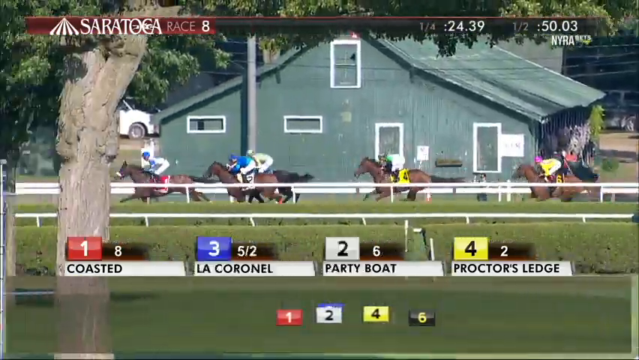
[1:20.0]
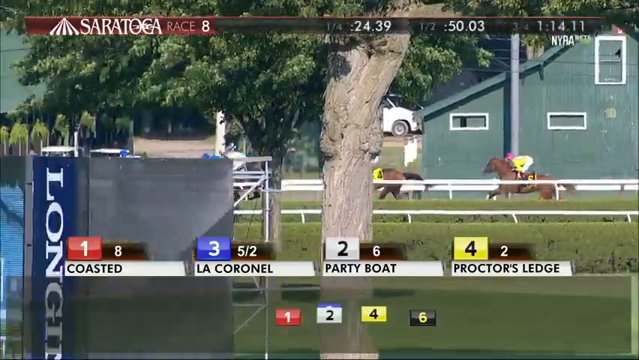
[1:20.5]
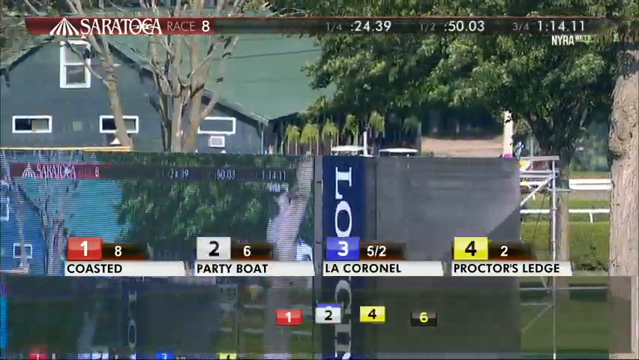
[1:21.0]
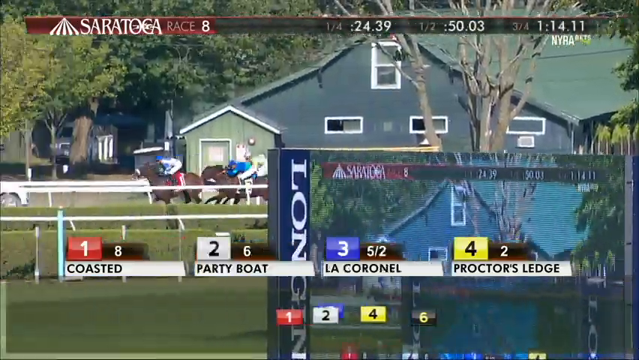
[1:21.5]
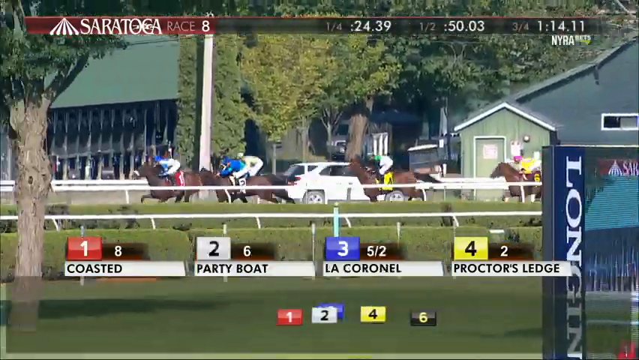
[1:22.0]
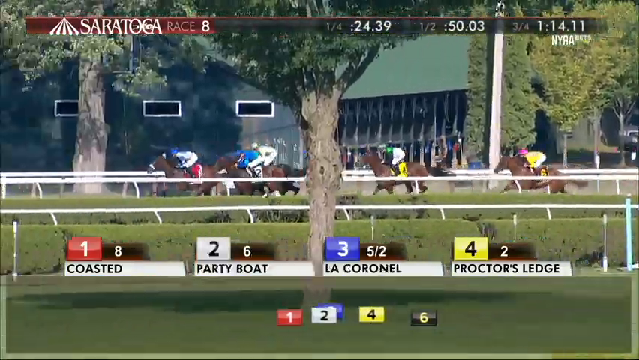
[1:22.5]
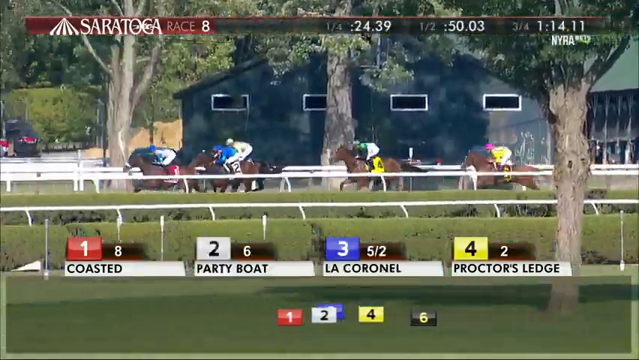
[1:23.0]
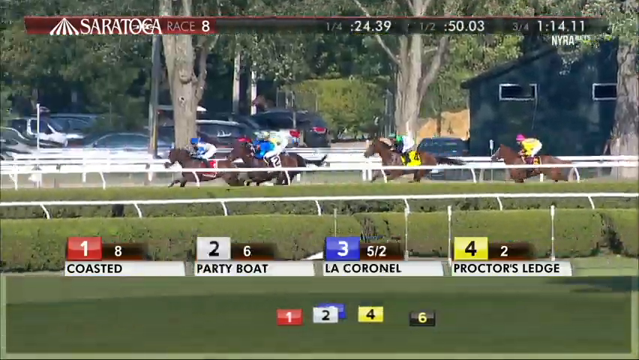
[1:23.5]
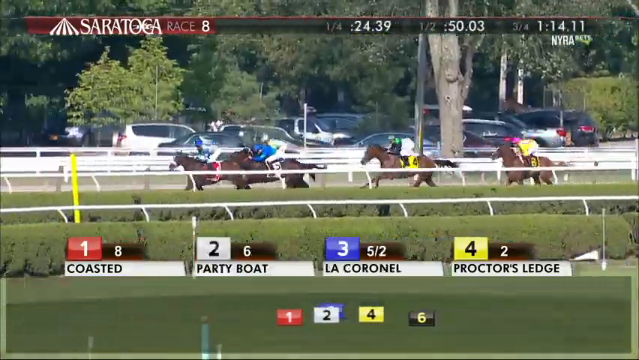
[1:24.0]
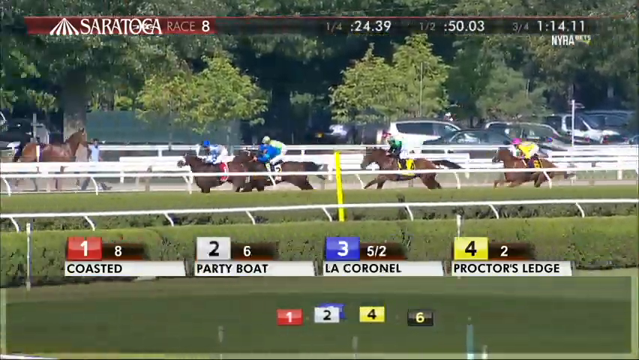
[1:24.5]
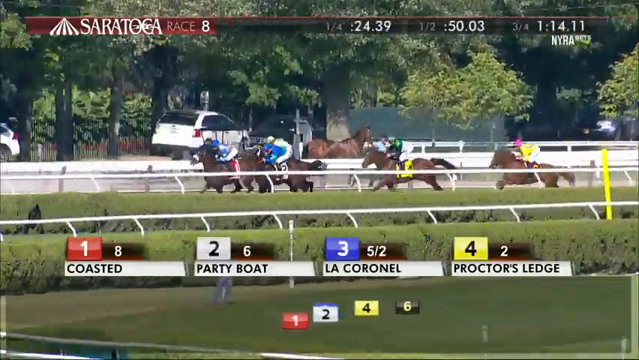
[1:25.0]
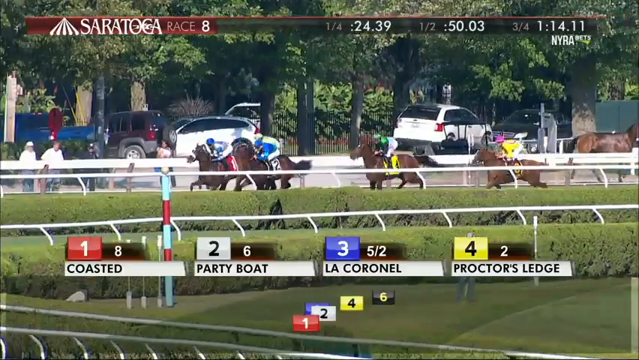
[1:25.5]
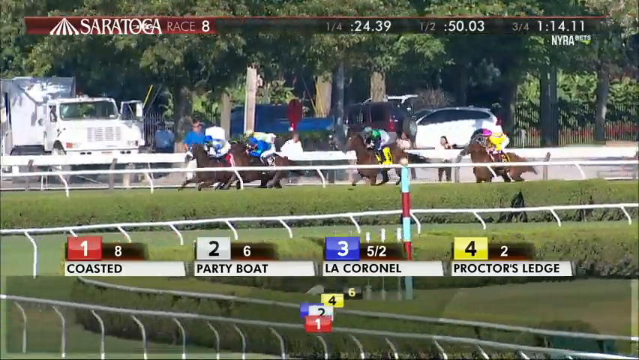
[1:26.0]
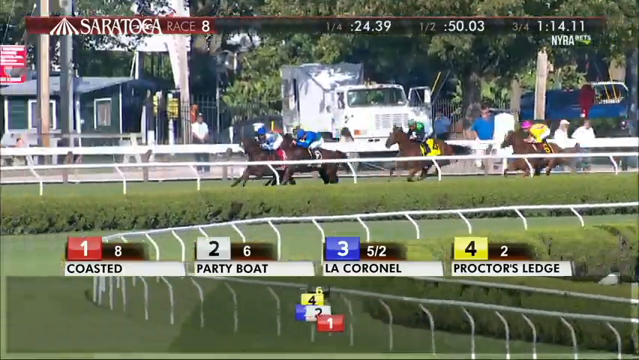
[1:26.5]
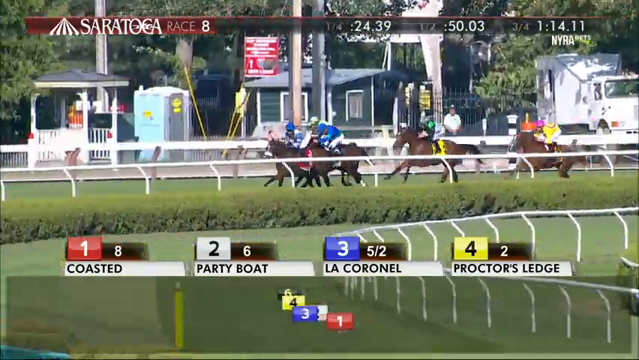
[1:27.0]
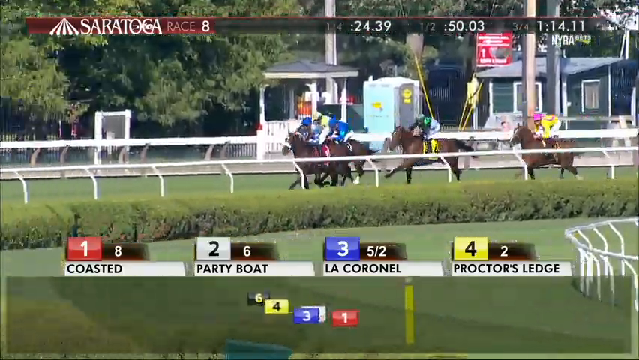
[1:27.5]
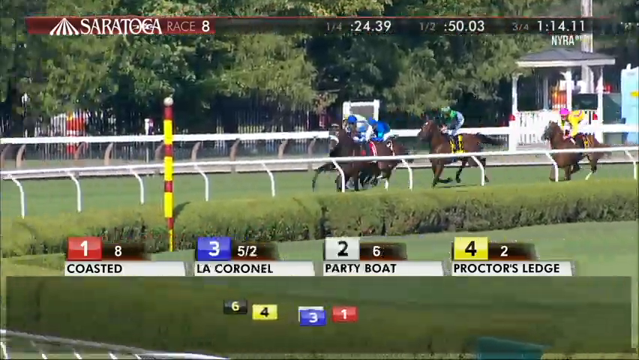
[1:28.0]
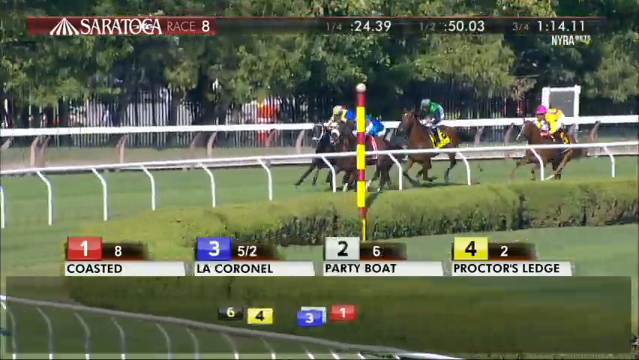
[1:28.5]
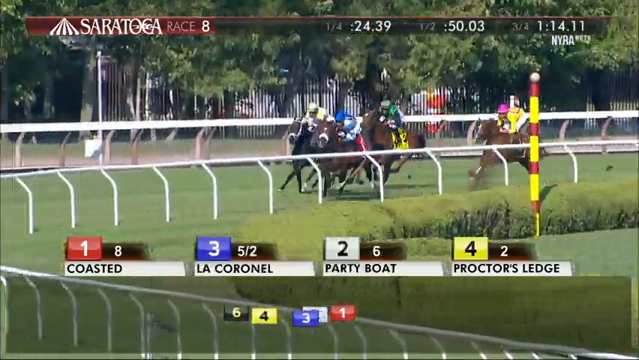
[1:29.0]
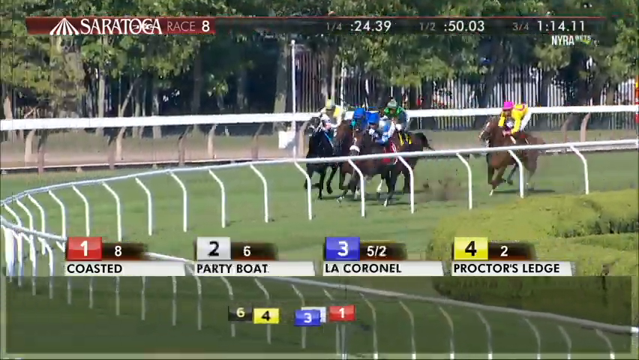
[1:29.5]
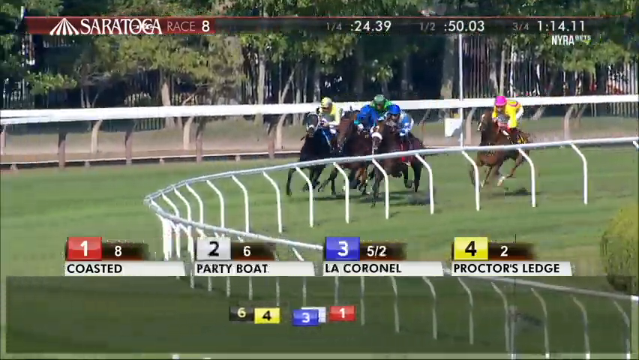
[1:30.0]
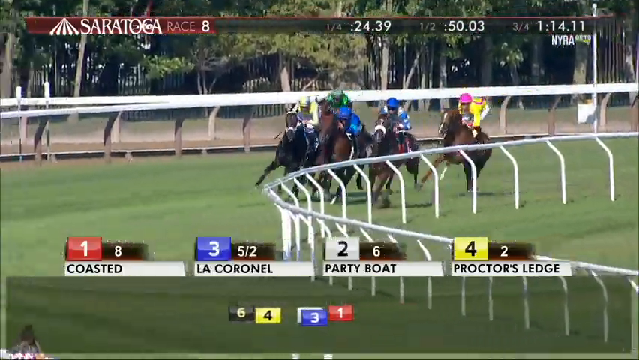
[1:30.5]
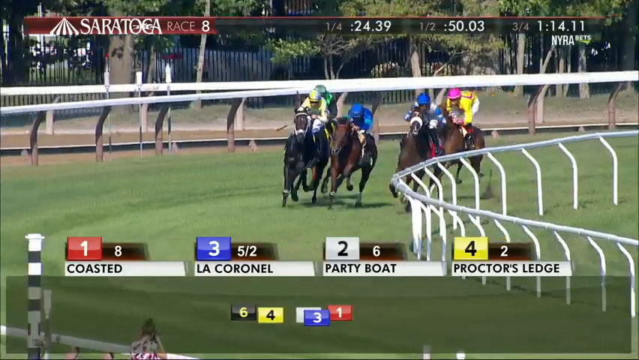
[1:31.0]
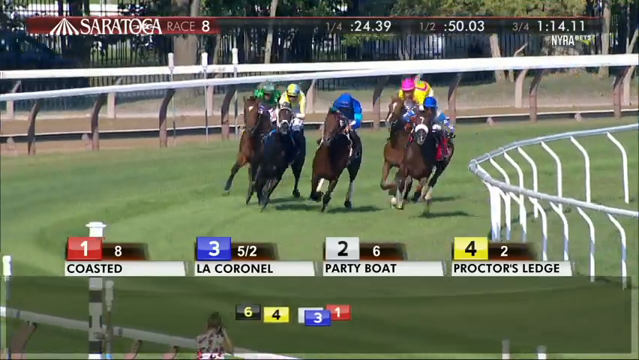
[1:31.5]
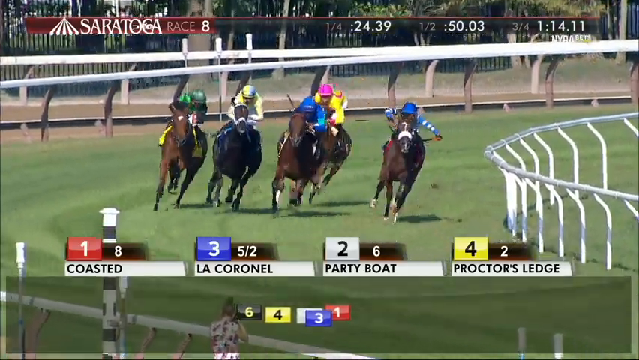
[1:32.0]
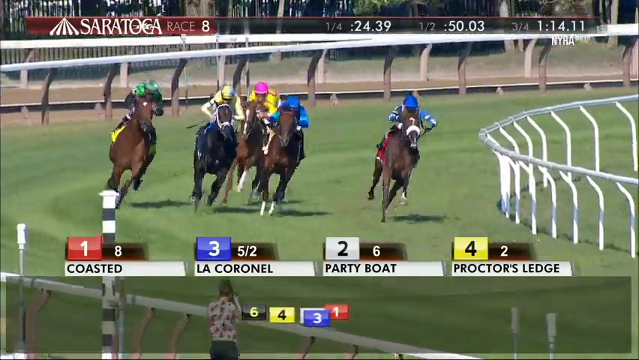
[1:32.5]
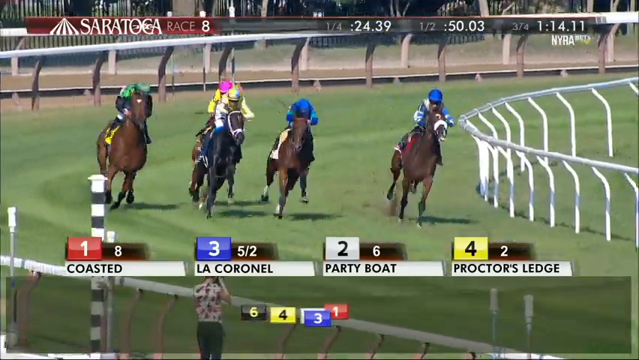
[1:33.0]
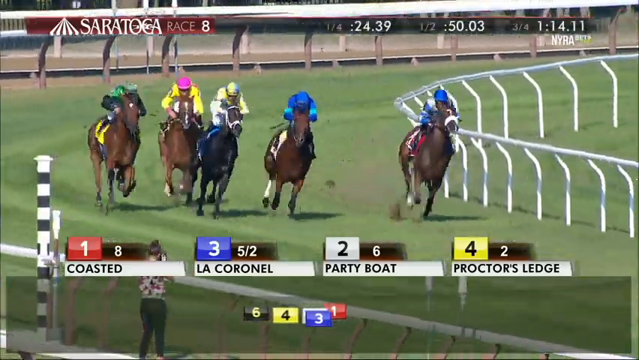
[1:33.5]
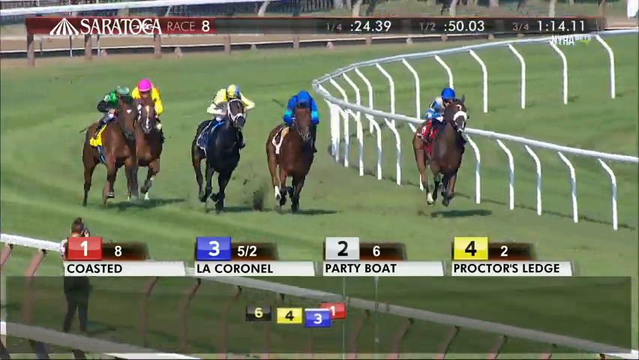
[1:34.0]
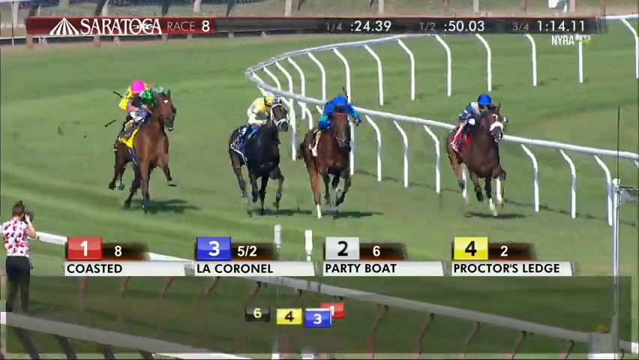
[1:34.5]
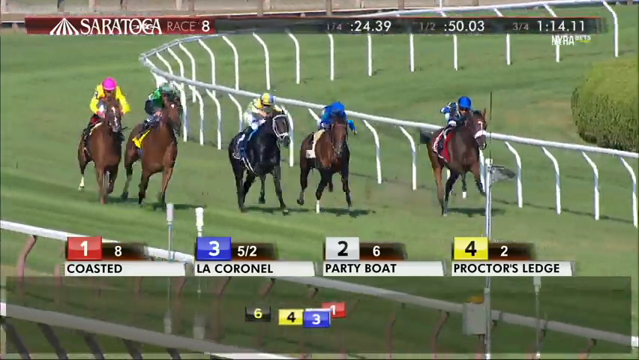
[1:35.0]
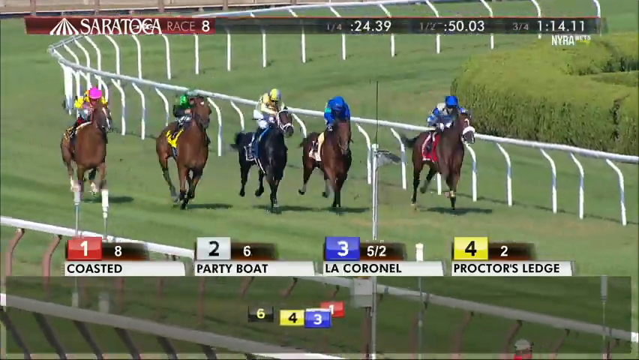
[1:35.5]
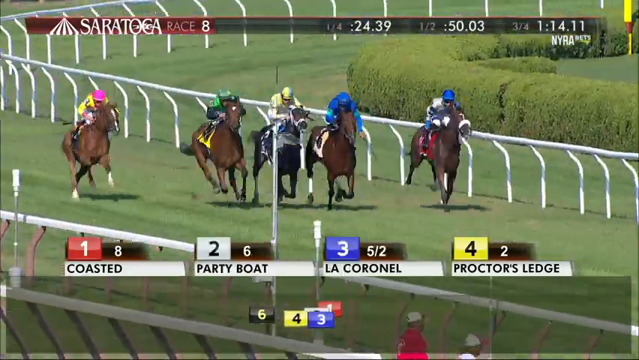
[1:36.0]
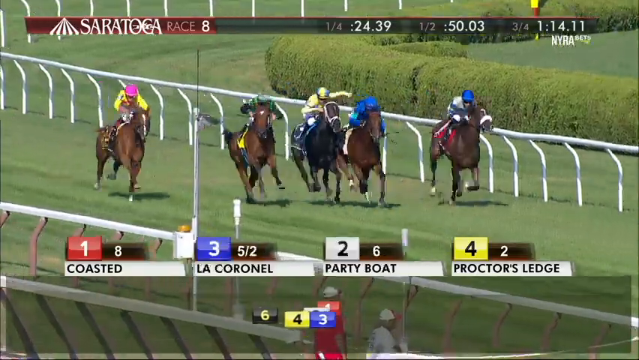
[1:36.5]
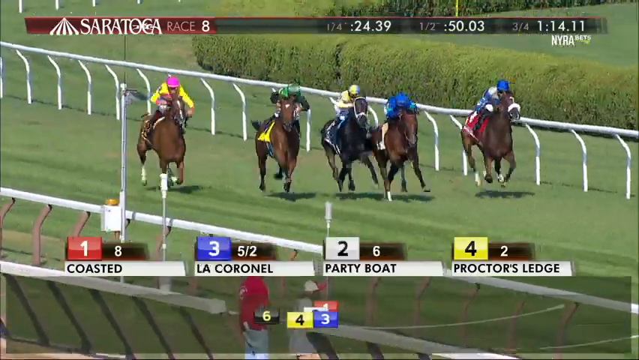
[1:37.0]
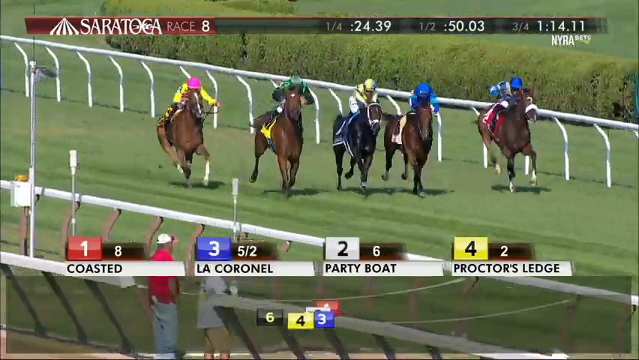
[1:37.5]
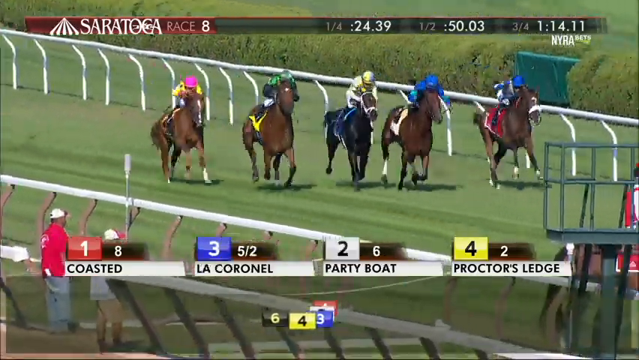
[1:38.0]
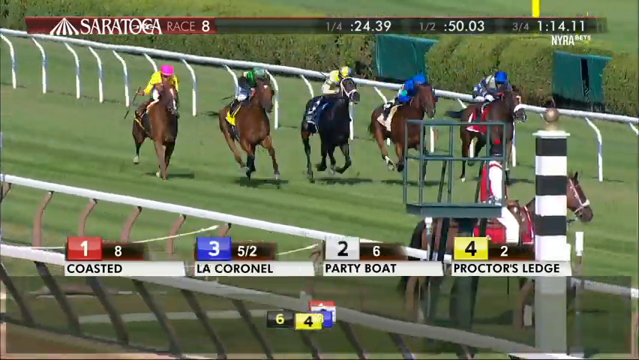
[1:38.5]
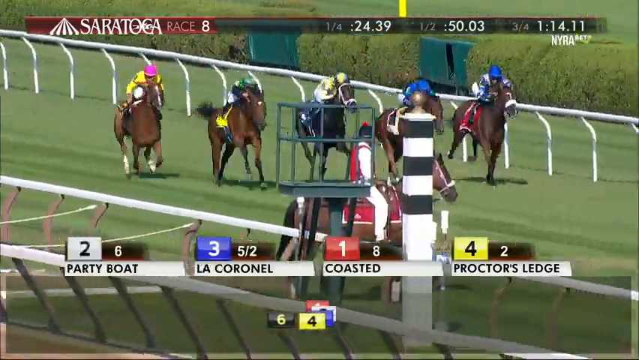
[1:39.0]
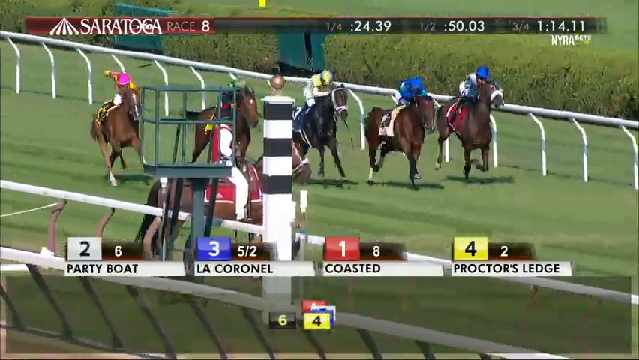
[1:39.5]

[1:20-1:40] The horses come around the final turn and down the stretch, with the camera following them. The jockeys are hitting their horses' backsides to make them go as fast as possible. The horses appear bunched together, roughly within one or two horse lengths of each other. The track is grass, not dirt. The order changes slightly: horse number one, Coasted, is still first, but horse number three, La Coronel, is now second, and horse number two, Partyboat, is third.